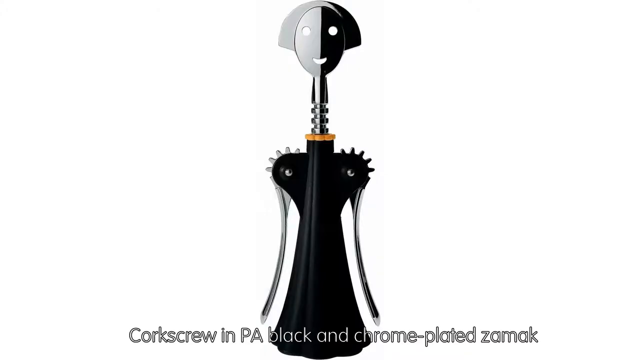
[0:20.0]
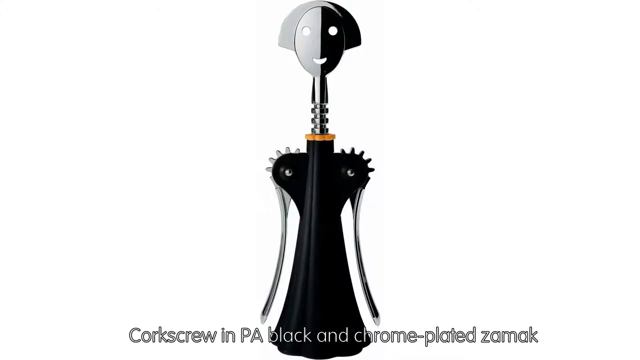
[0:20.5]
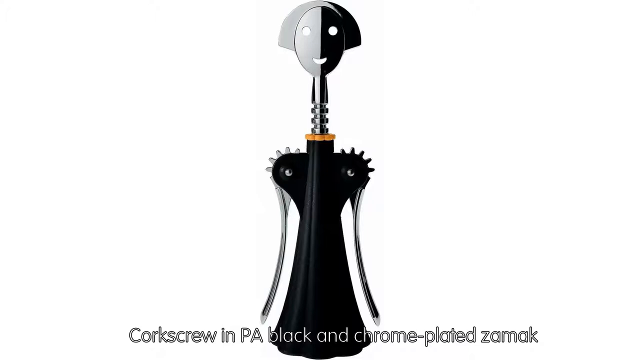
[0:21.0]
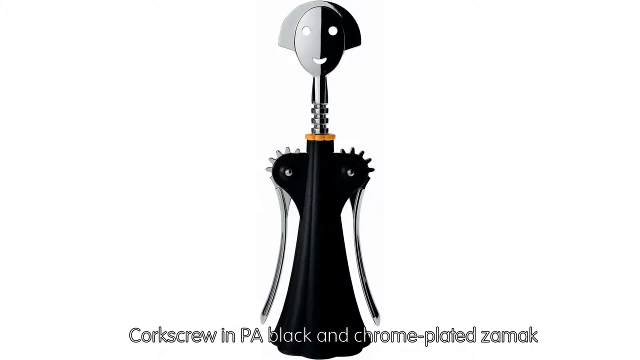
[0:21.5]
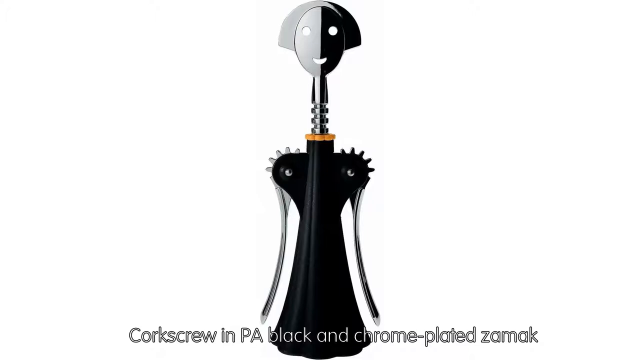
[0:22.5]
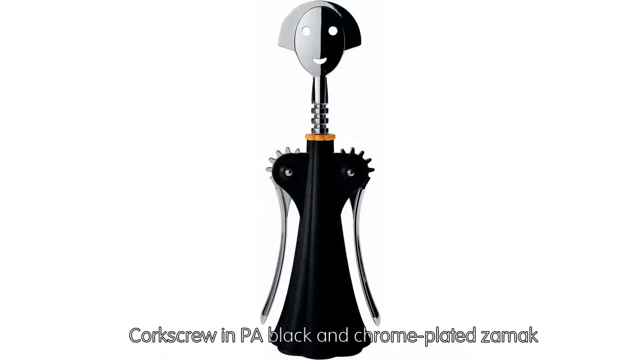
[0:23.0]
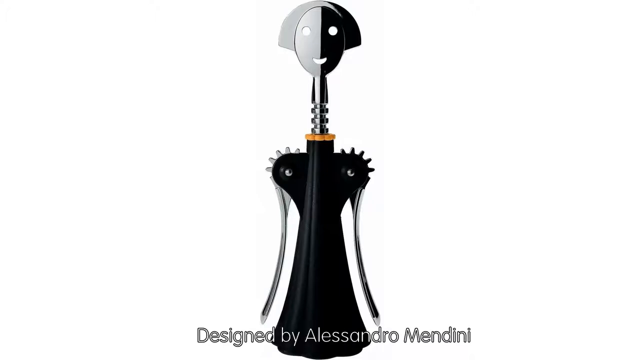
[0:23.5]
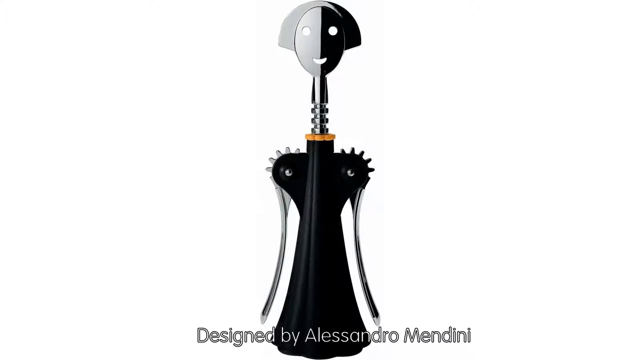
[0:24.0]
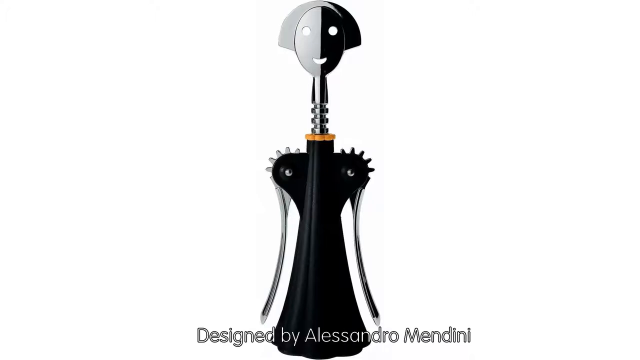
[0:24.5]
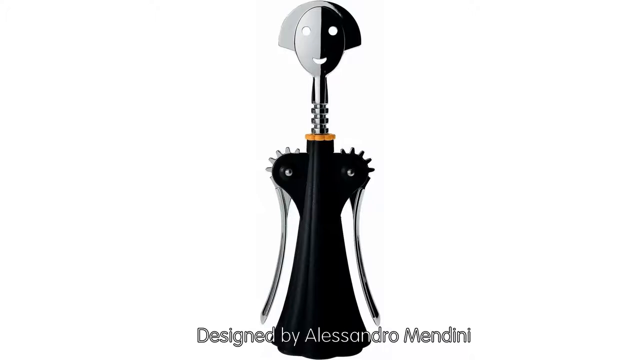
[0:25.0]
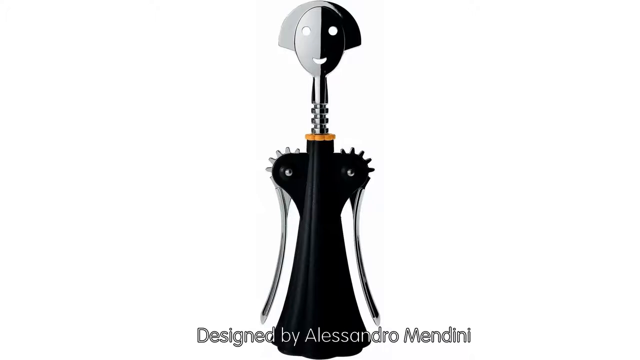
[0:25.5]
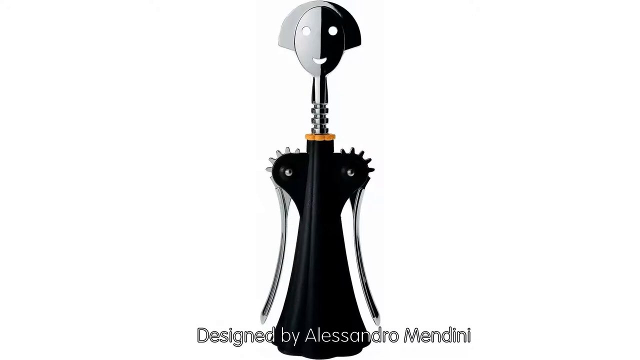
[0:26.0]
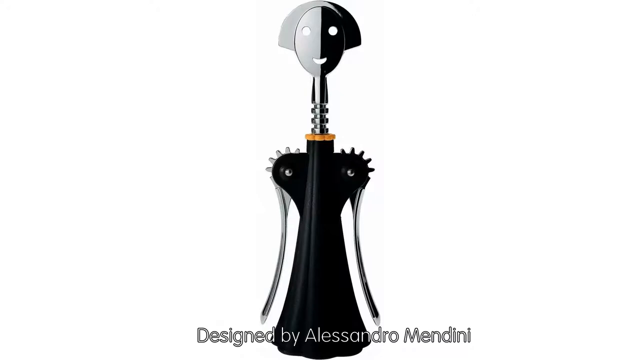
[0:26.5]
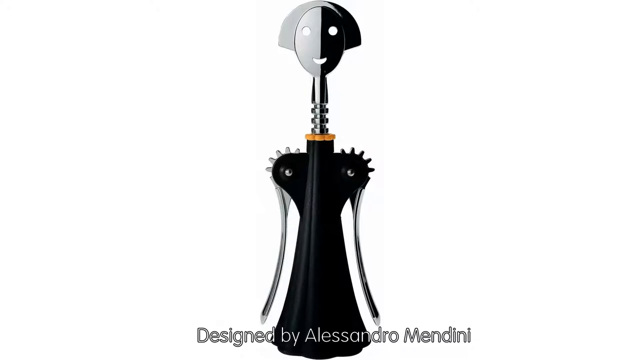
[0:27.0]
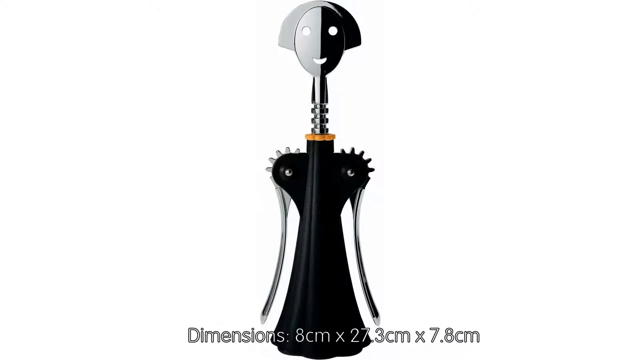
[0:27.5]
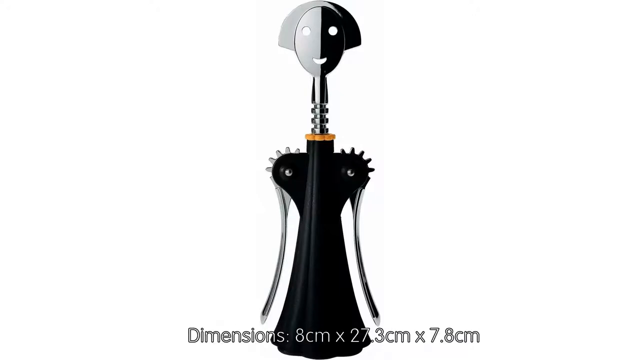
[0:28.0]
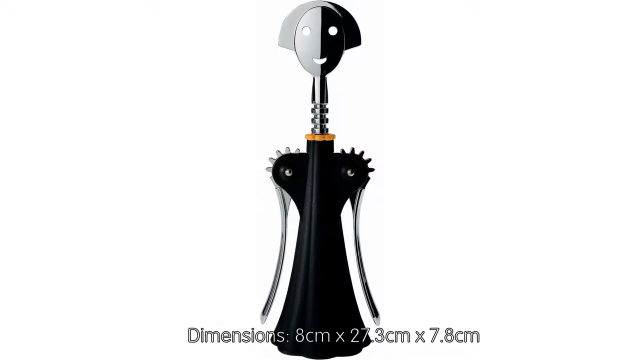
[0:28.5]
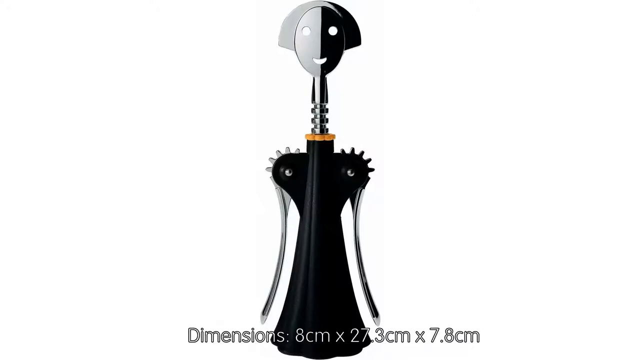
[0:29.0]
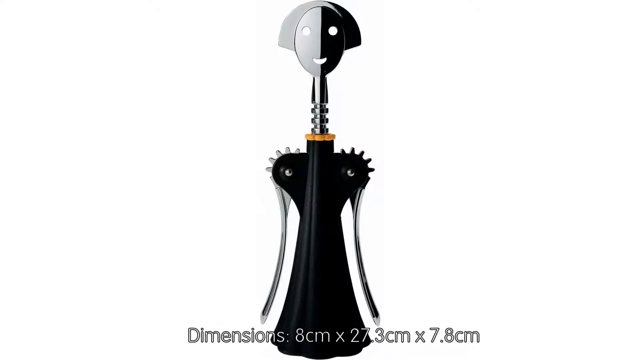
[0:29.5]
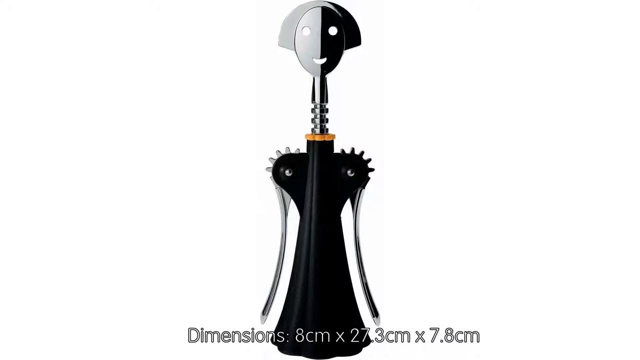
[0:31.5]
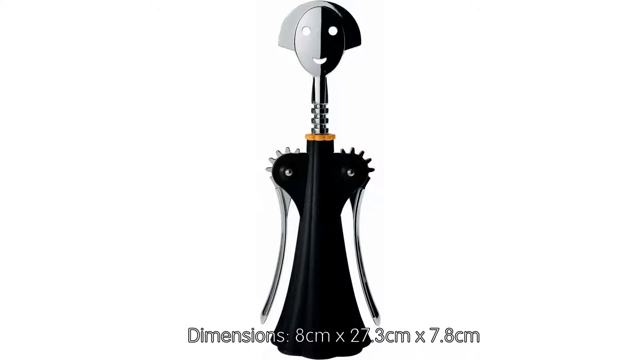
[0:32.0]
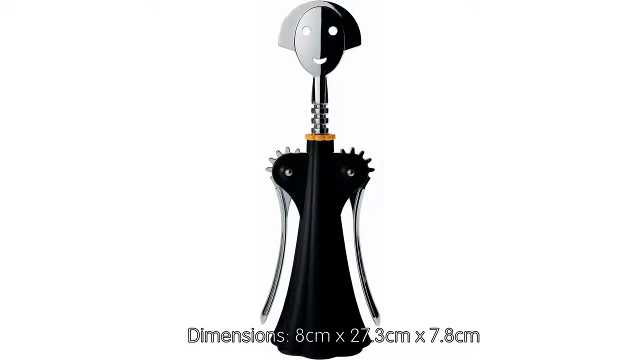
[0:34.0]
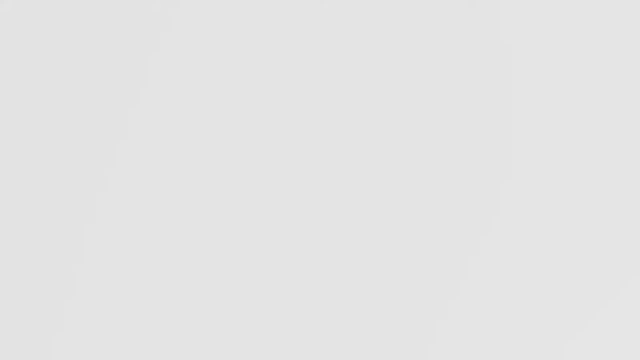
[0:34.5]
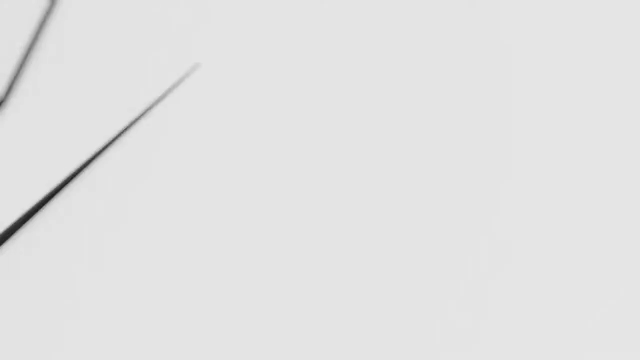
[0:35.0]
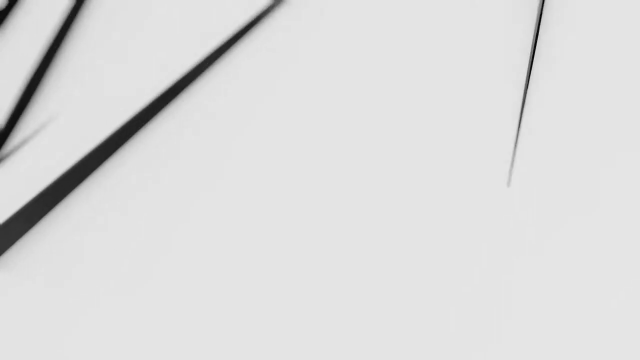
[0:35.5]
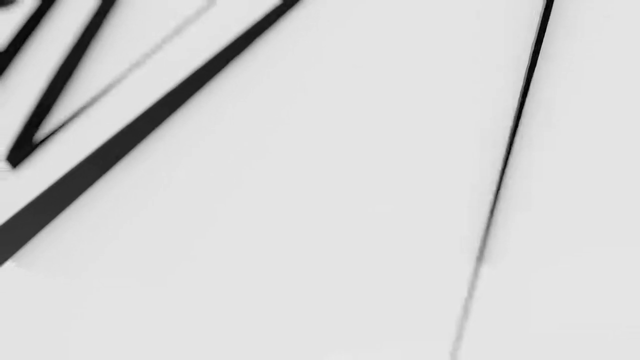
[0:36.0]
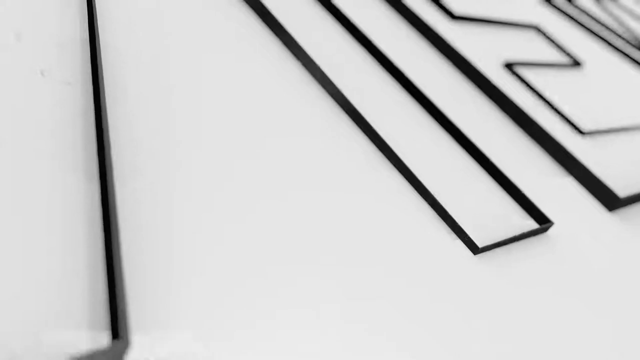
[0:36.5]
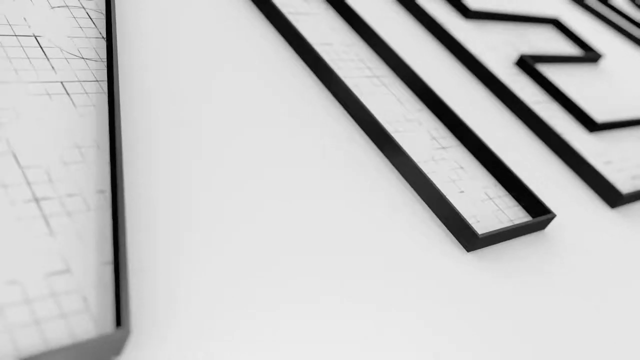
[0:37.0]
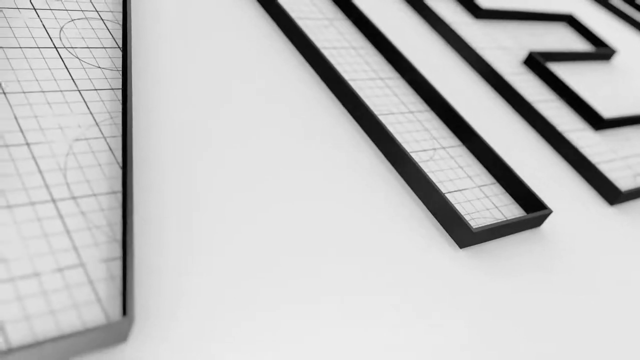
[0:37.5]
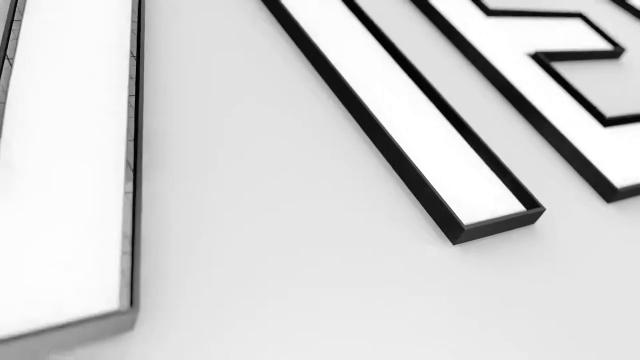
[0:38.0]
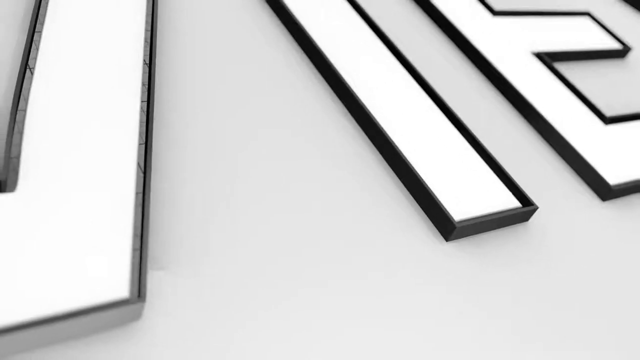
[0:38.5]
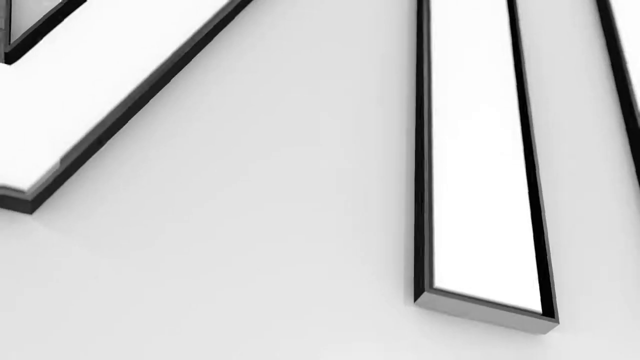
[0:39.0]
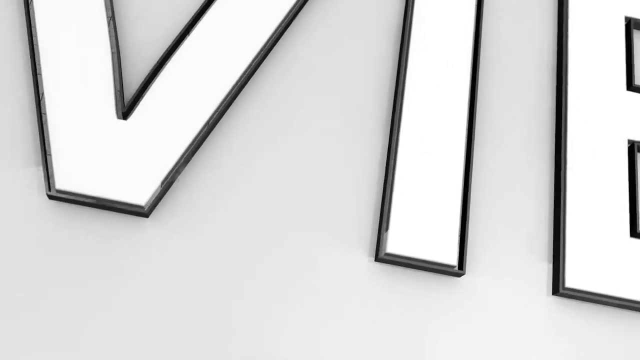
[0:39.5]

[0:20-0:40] What looks to be a corkscrew is shown, and it has a kind of human quality. It is black with silver handles on the sides and a silver turning mechanism. The levers almost look like arms, and the twisting mechanism has what are kind of eyes and a mouth punched out of it, and even what looks to be kind of hair, giving it an almost female shape. The corkscrew is presented on an all-white background in a long, very close look in which nothing changes. Afterward, lettering comes onto the screen: the letters are white and outlined in black, shown from such a close-up view that what they say cannot yet be made out.